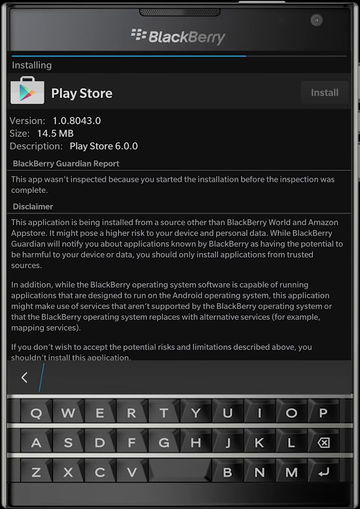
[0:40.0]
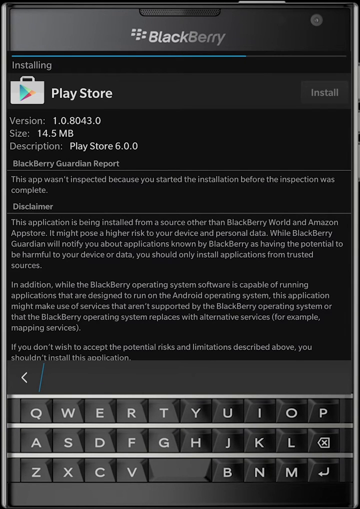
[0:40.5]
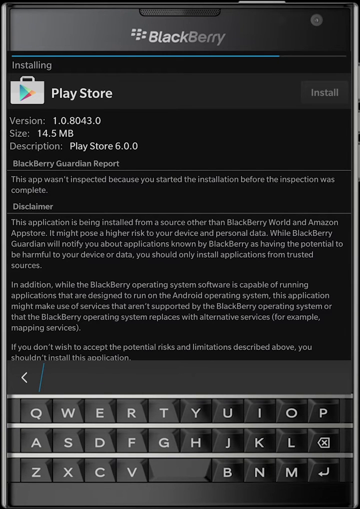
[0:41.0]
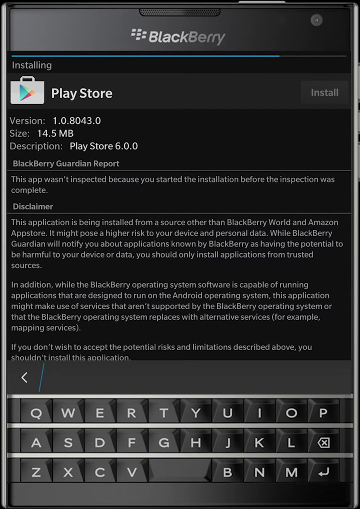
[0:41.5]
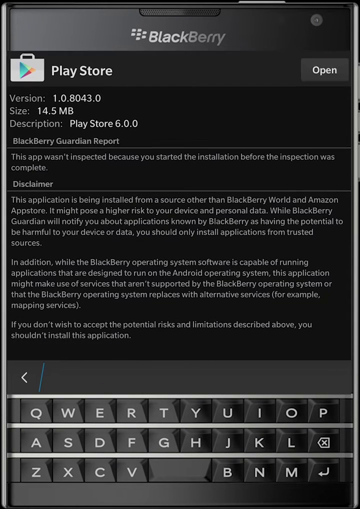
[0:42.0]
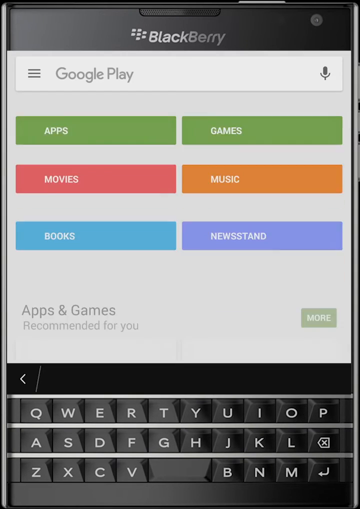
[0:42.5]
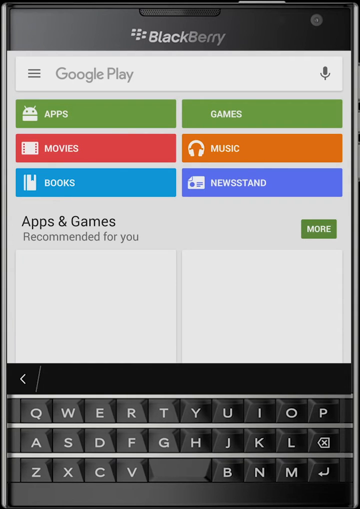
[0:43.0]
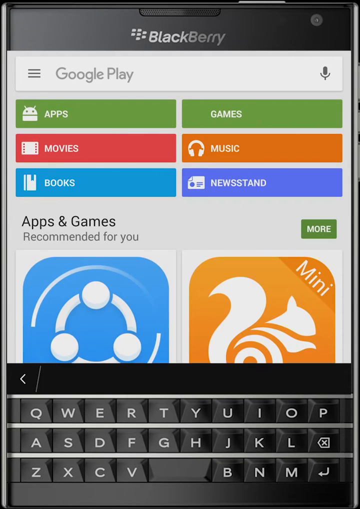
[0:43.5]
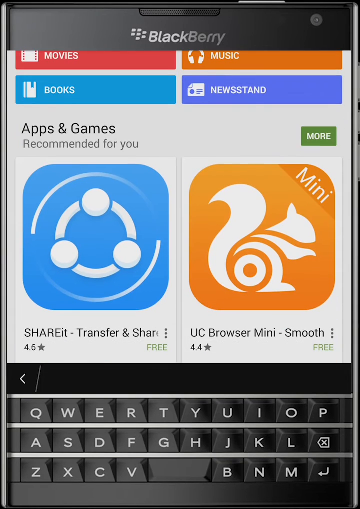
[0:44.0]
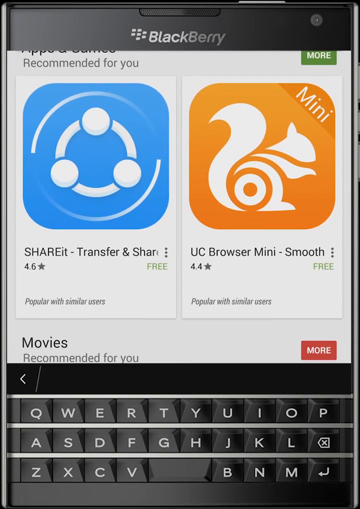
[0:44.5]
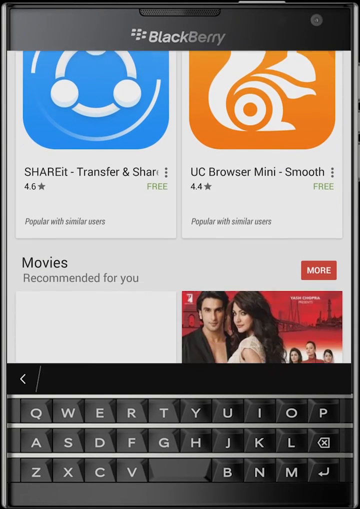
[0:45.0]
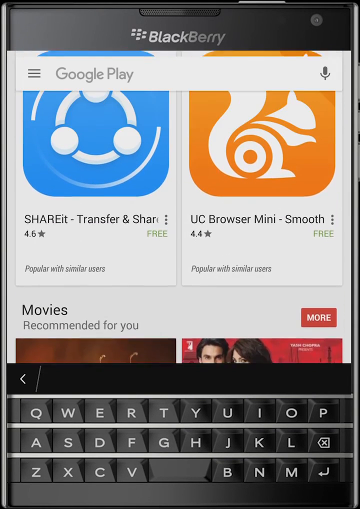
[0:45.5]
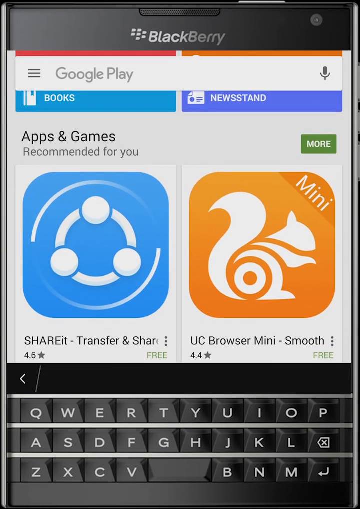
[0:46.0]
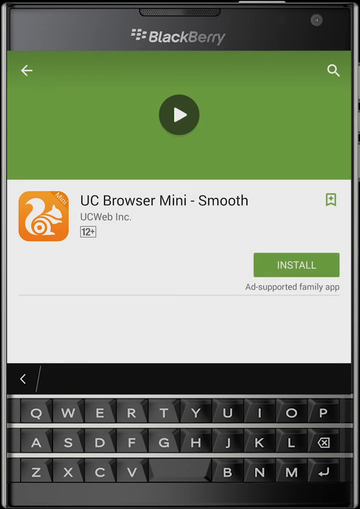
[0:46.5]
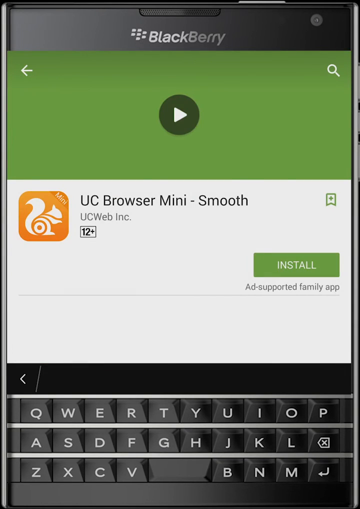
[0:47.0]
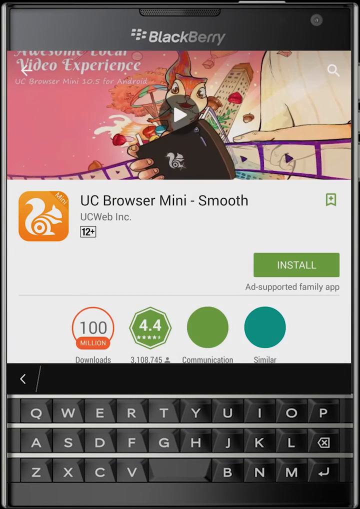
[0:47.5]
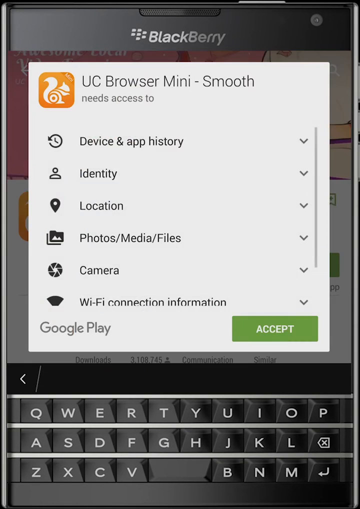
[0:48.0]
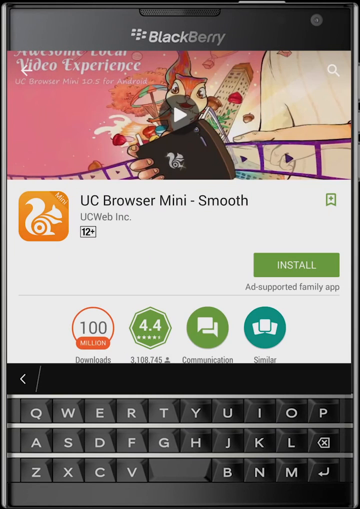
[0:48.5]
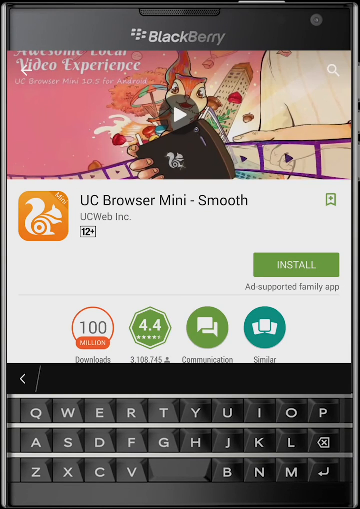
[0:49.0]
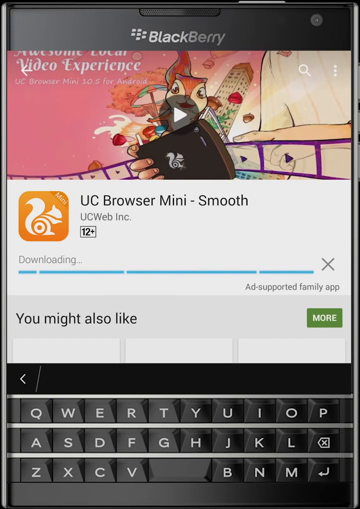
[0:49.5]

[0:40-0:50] The user, still having issues with the Play Store app, uninstalls the Play Store entirely, confirming the uninstallation in their apps until it is done. They then navigate to the APK file they put on the device earlier and install it again, and the installation completes.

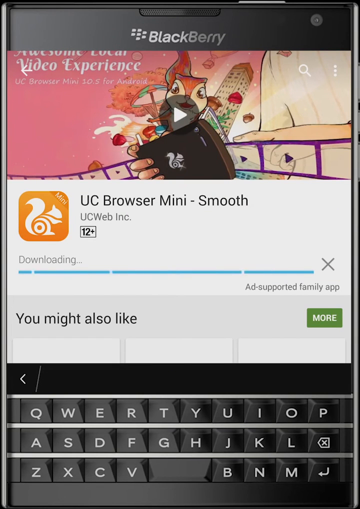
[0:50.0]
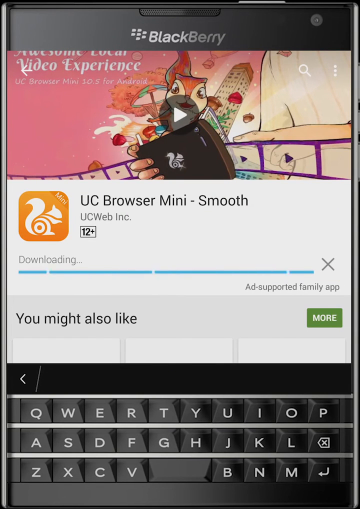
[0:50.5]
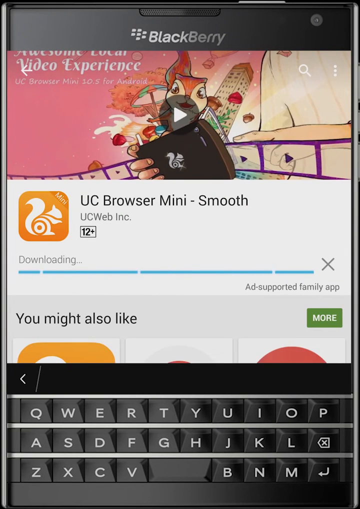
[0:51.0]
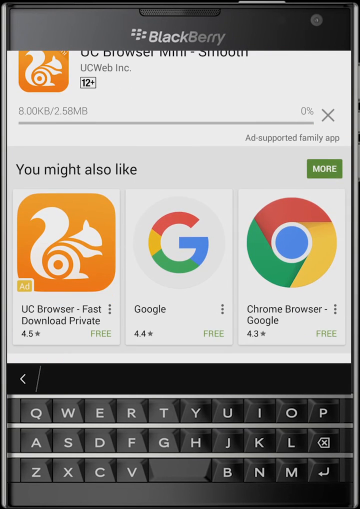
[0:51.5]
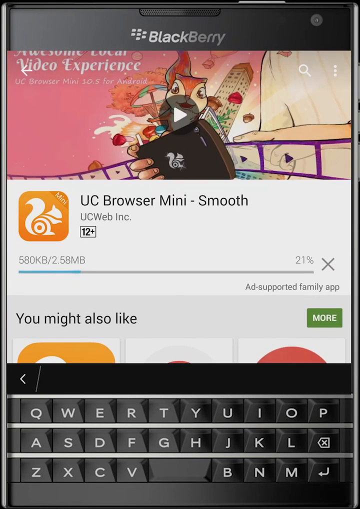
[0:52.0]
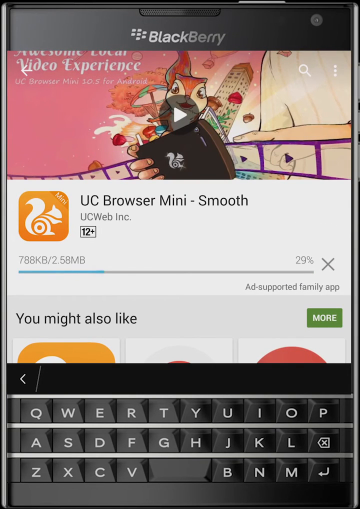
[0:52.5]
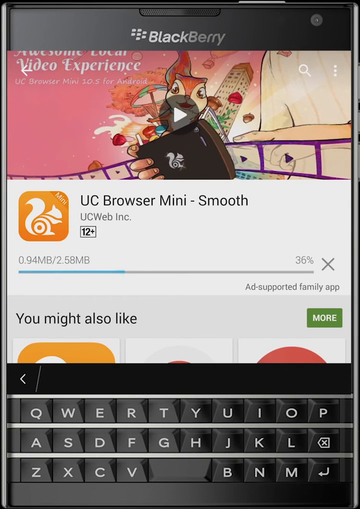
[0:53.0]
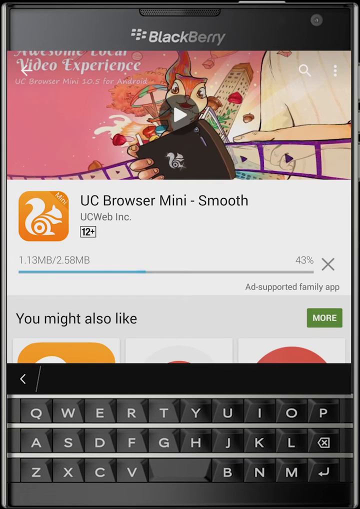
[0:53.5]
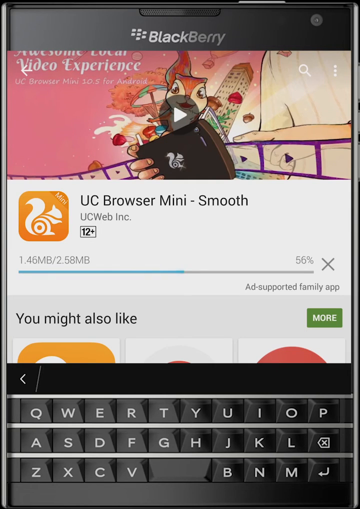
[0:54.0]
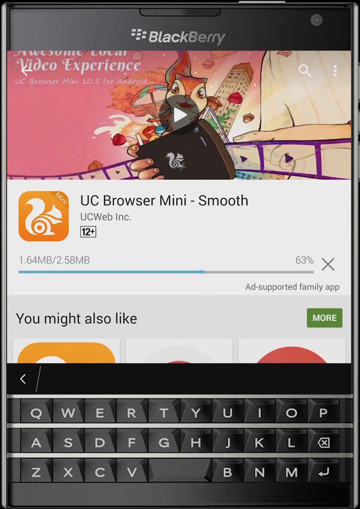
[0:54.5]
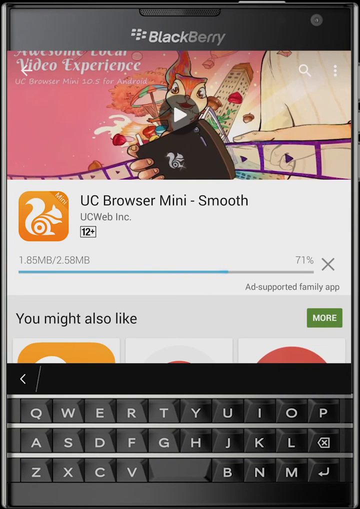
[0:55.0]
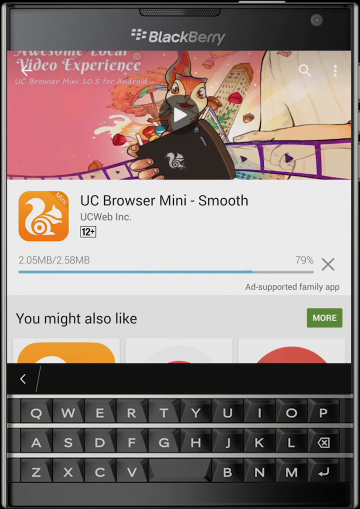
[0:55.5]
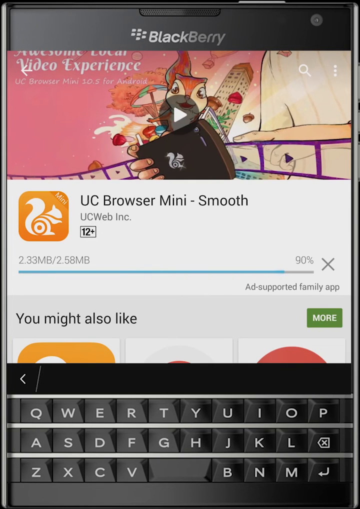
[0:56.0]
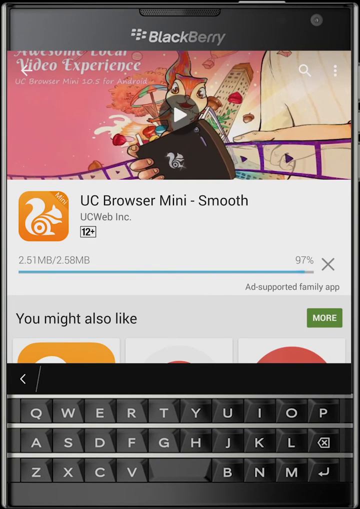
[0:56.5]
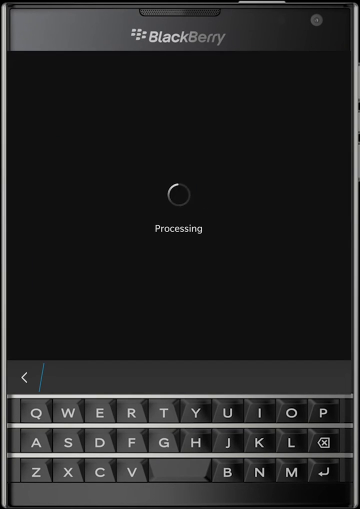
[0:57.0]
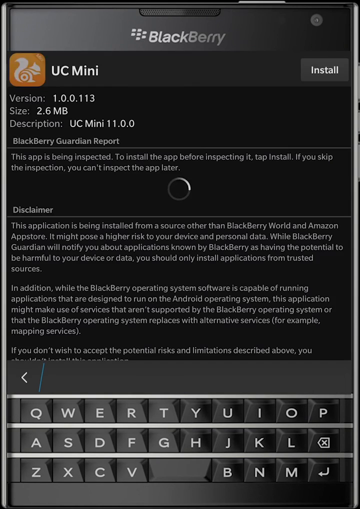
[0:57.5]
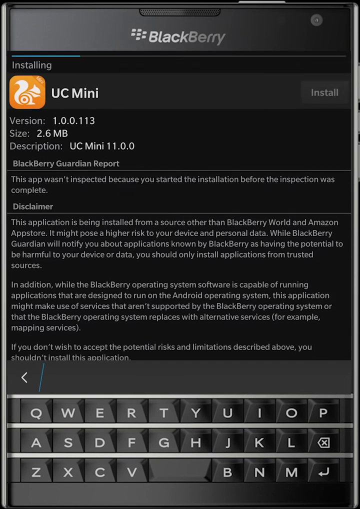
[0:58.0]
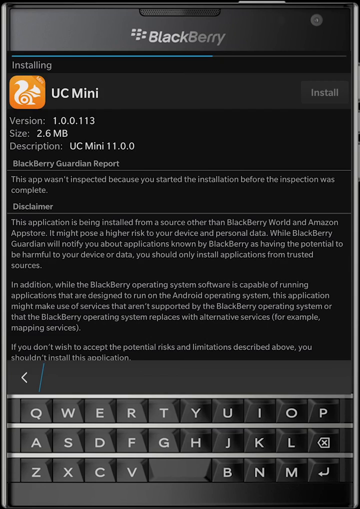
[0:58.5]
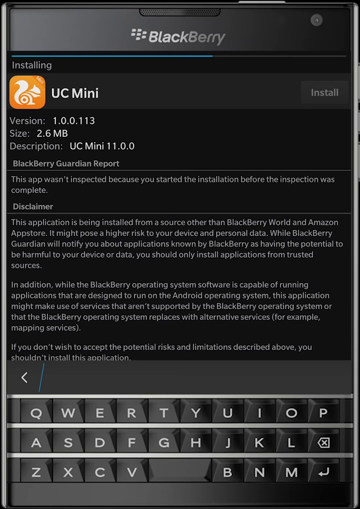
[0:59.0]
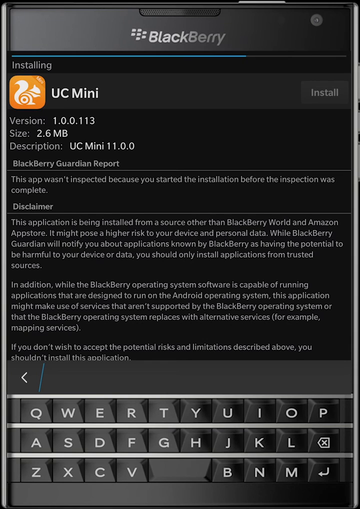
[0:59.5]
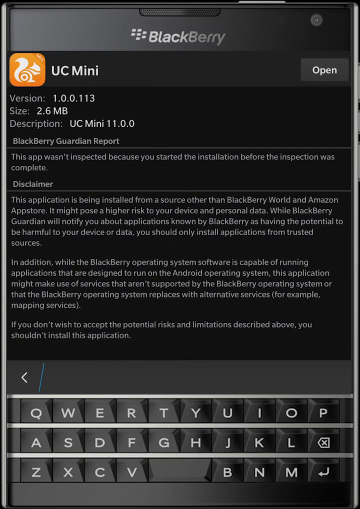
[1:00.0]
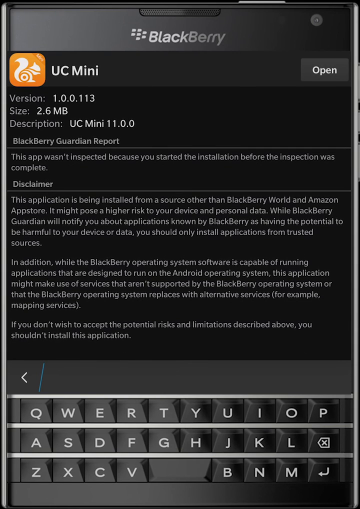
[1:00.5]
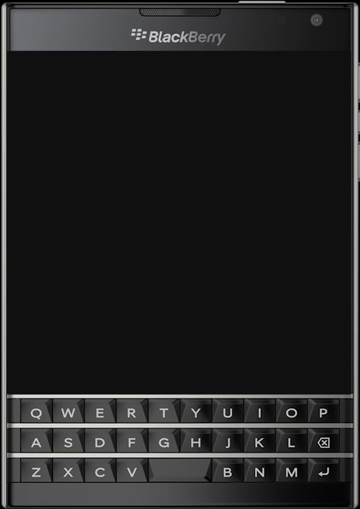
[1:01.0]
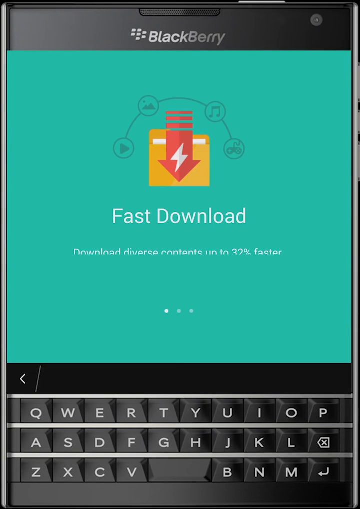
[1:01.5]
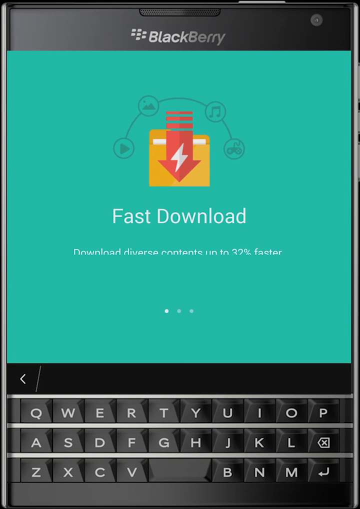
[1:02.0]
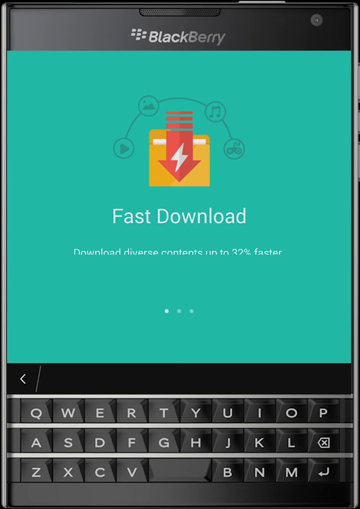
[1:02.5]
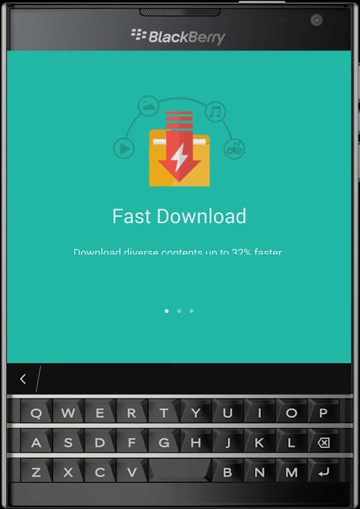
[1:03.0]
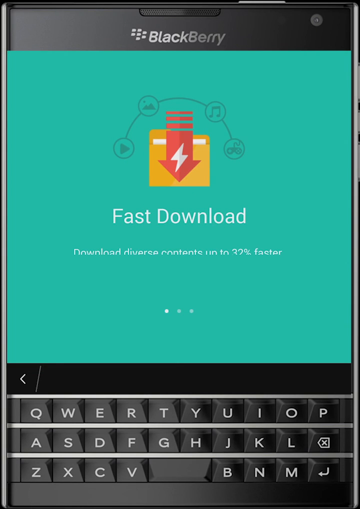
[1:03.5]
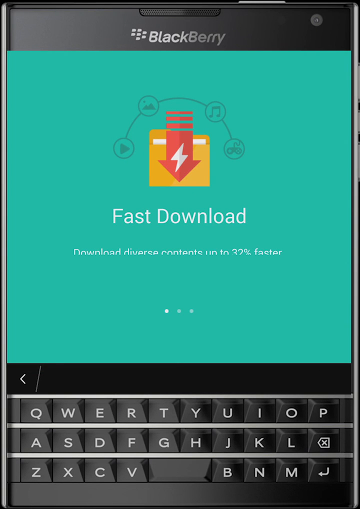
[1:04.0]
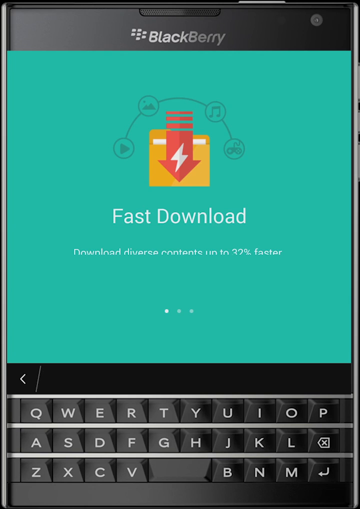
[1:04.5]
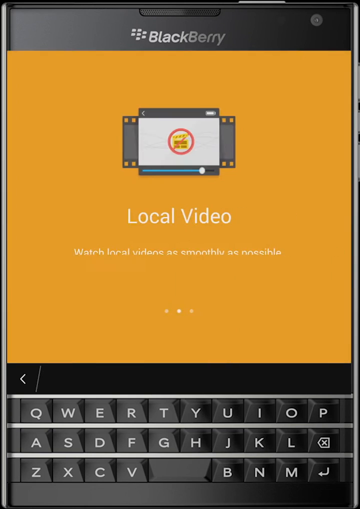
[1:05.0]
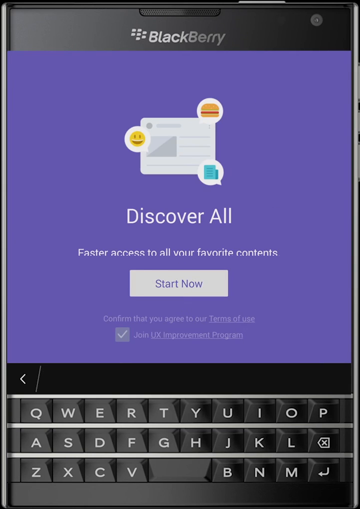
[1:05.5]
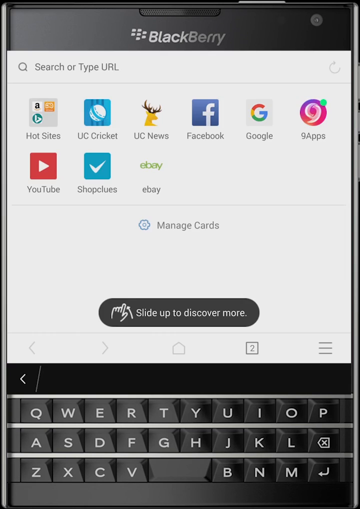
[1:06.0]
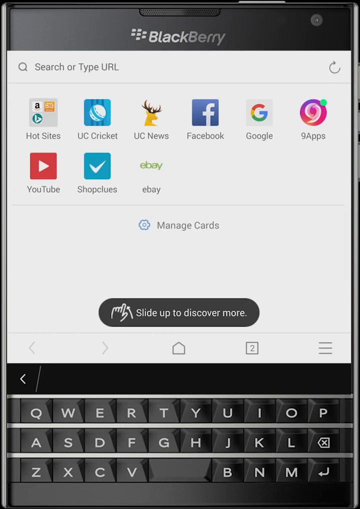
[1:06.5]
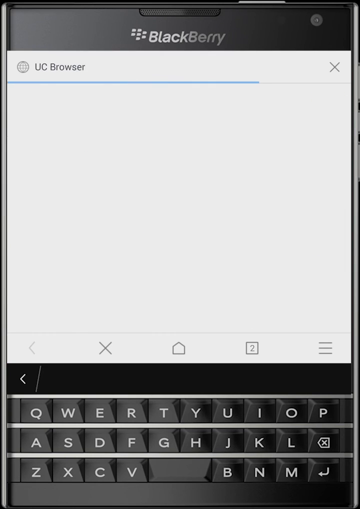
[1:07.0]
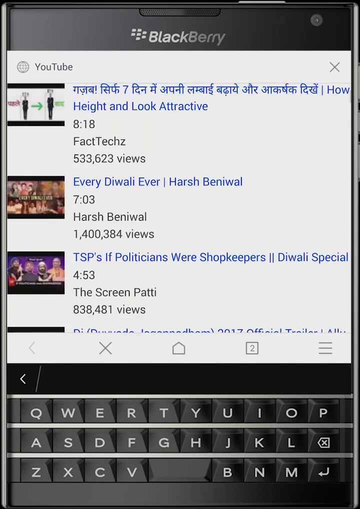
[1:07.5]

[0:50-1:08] After reinstalling the Google Play Store, the user tries again to download the UC Browser app on the device, and it looks like the issue has been fixed. The download starts and goes smoothly and fairly fast, without any problems. The UC Browser app installs on the device, the installation completes successfully, and the user starts browsing in the app.